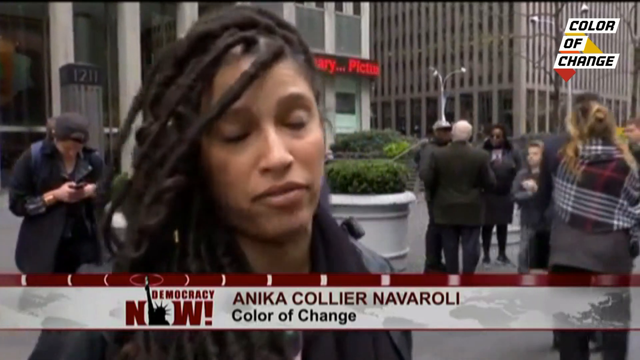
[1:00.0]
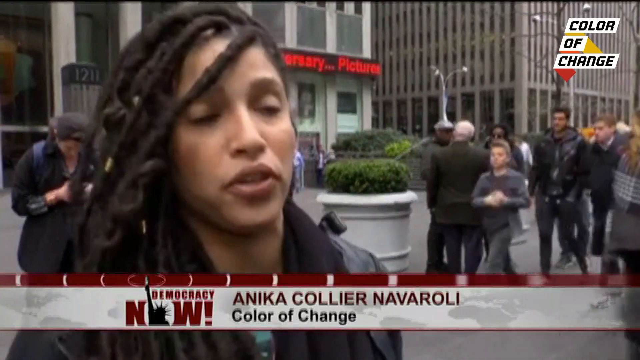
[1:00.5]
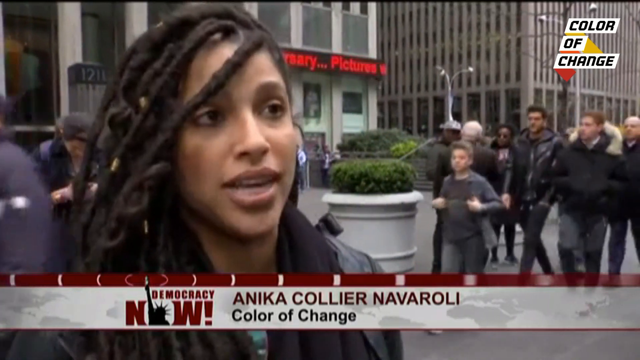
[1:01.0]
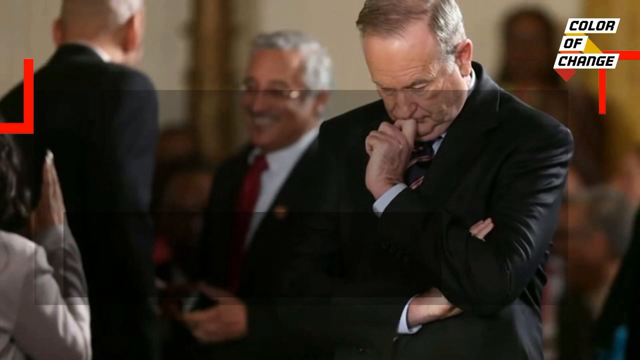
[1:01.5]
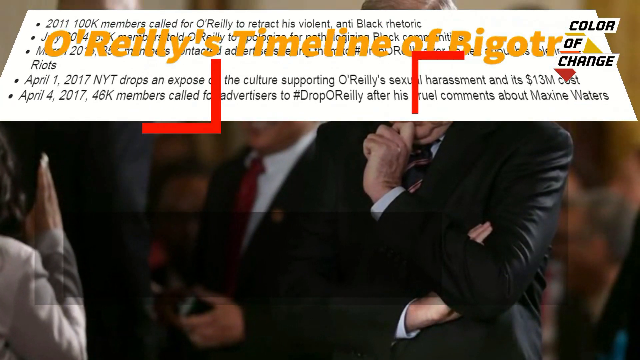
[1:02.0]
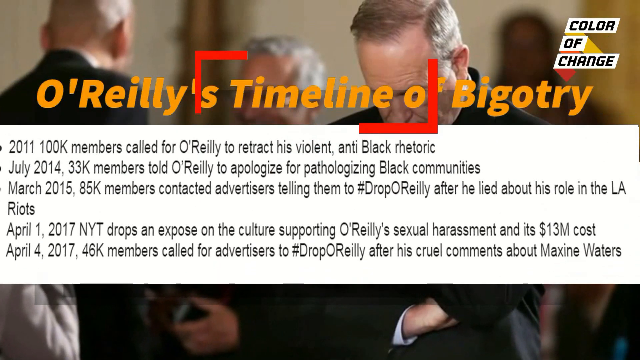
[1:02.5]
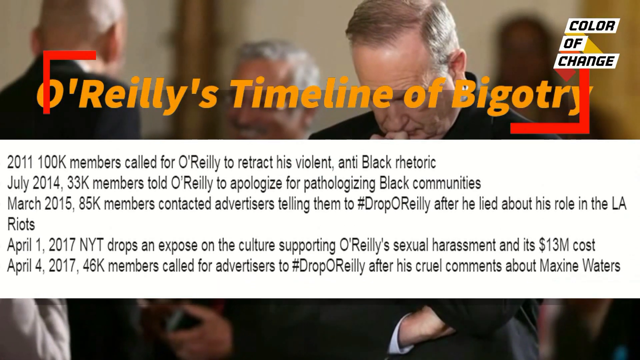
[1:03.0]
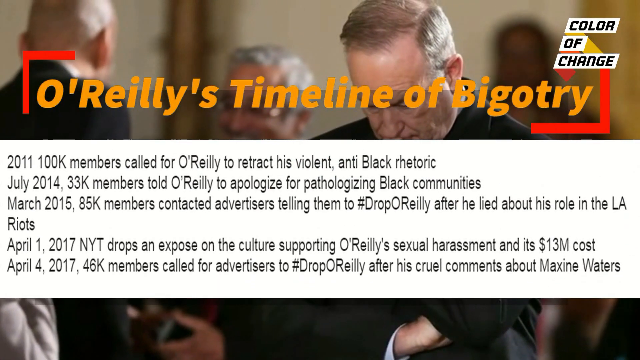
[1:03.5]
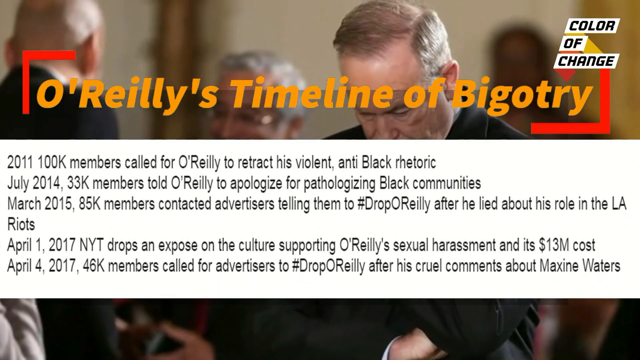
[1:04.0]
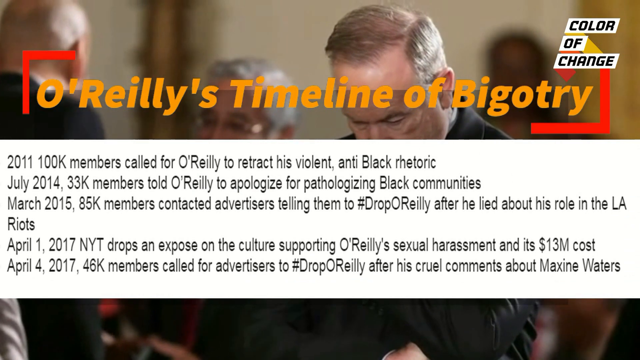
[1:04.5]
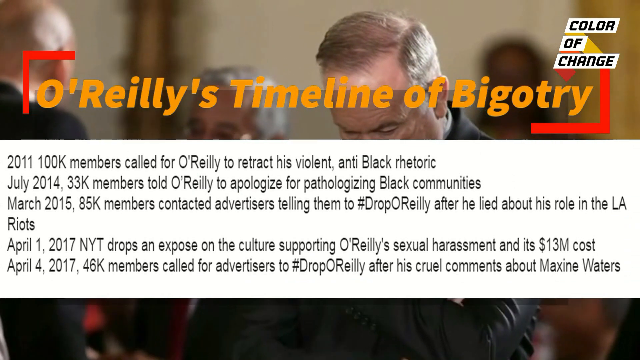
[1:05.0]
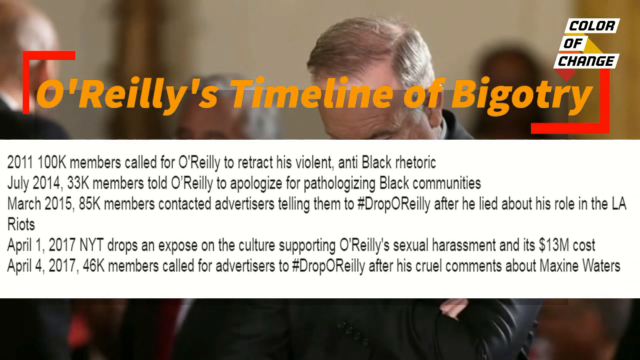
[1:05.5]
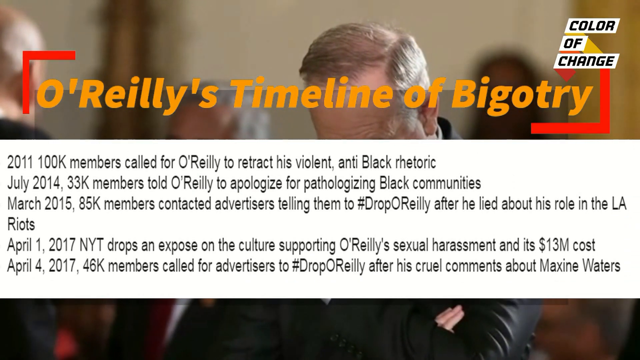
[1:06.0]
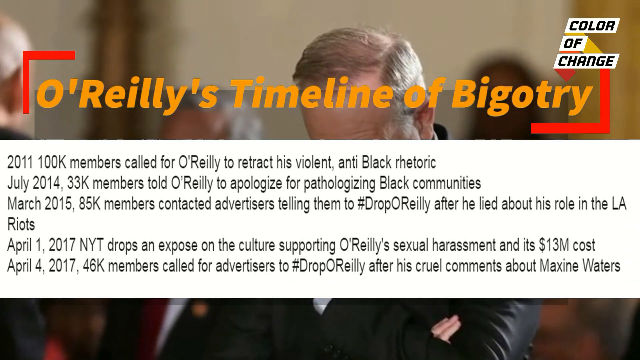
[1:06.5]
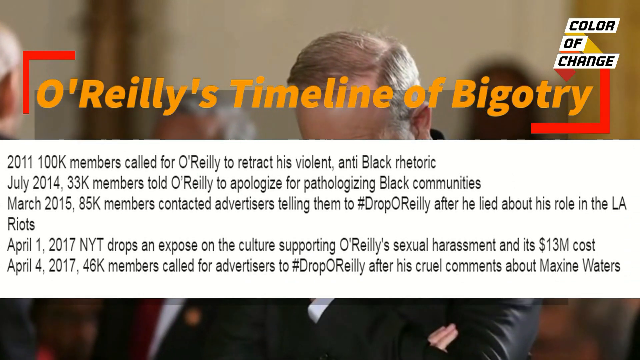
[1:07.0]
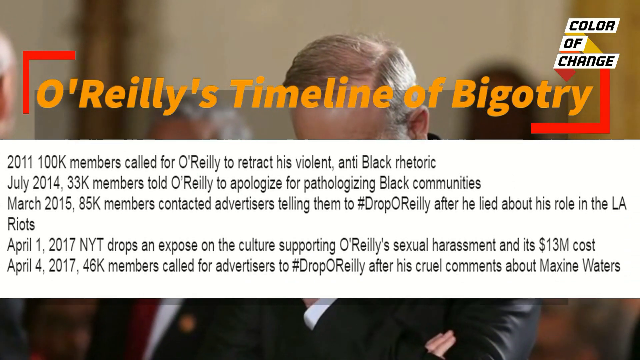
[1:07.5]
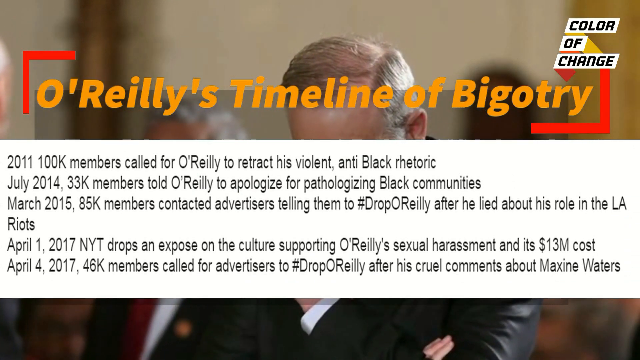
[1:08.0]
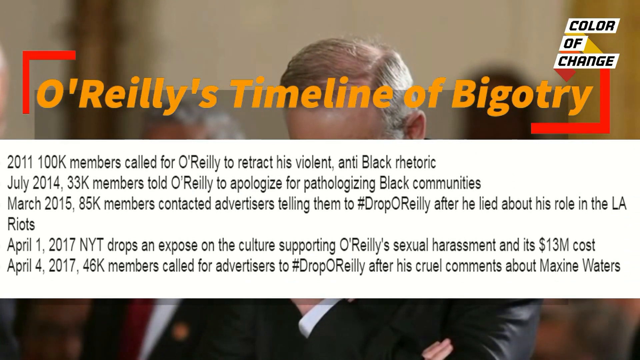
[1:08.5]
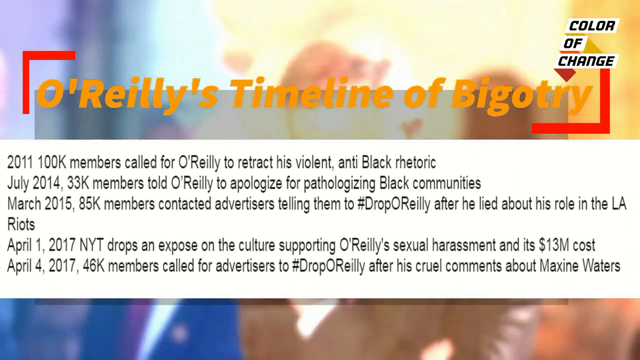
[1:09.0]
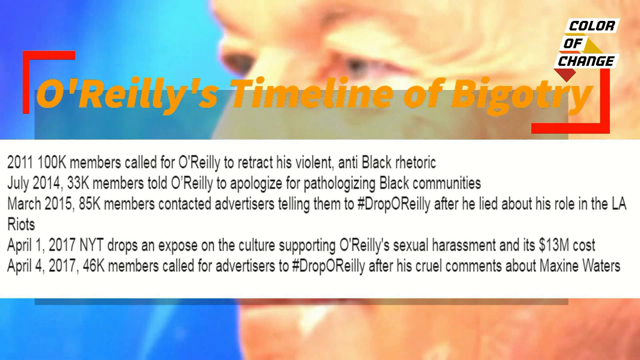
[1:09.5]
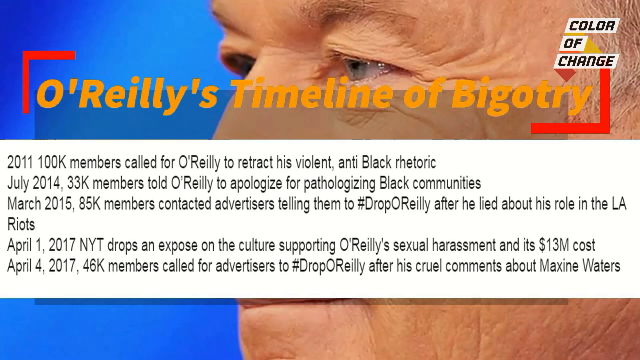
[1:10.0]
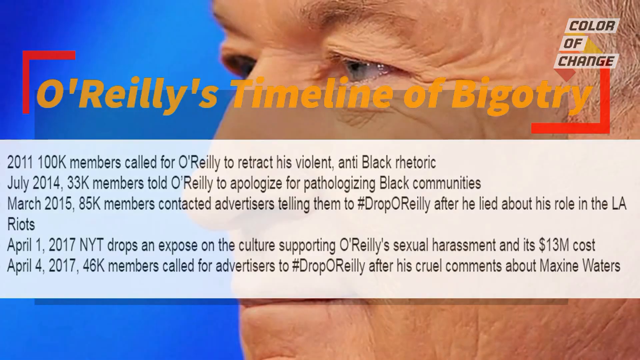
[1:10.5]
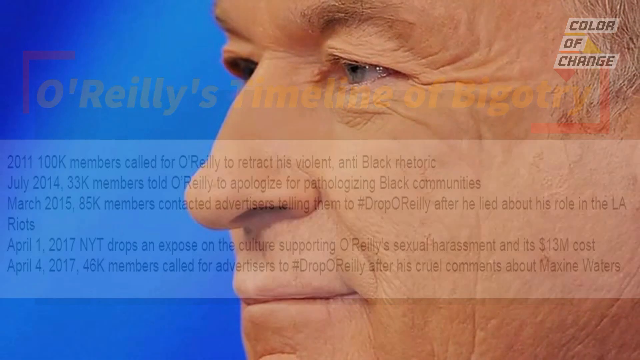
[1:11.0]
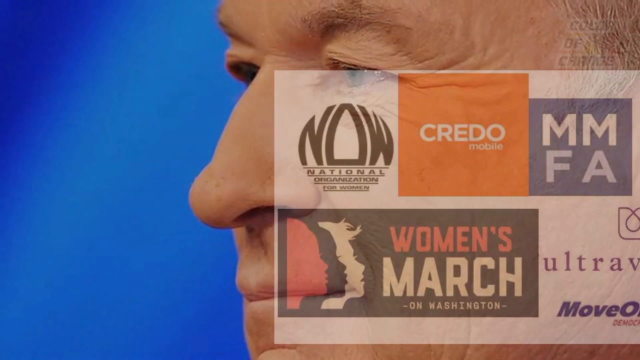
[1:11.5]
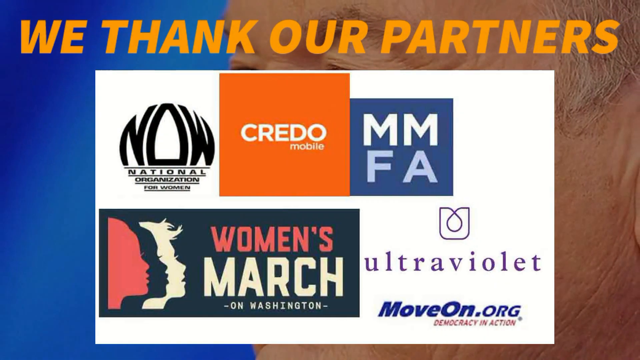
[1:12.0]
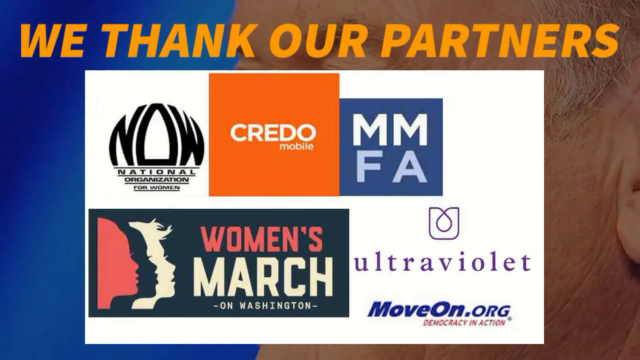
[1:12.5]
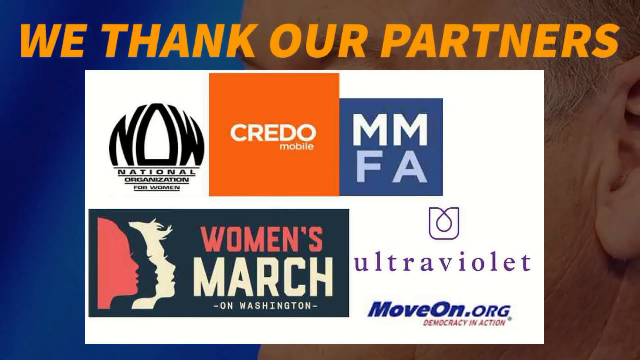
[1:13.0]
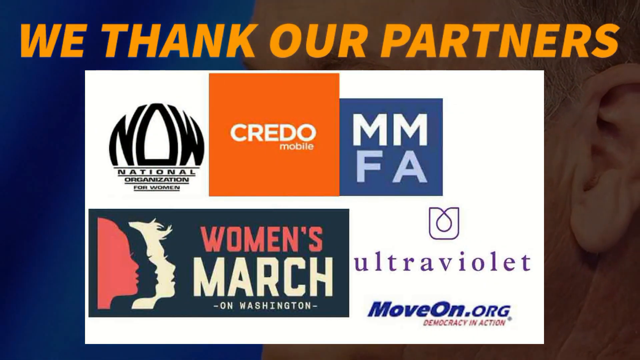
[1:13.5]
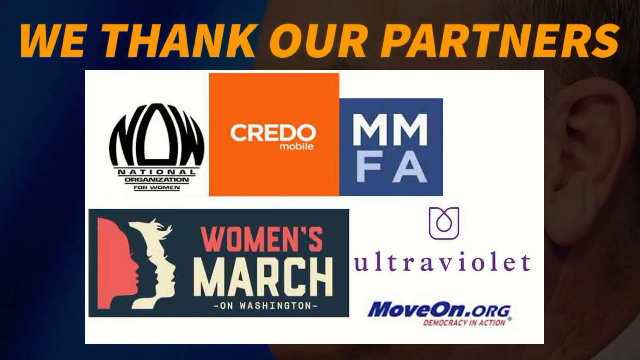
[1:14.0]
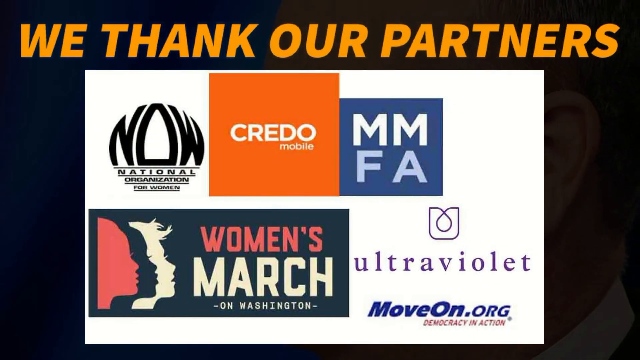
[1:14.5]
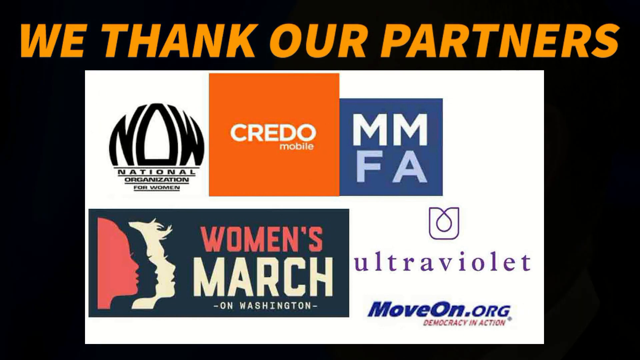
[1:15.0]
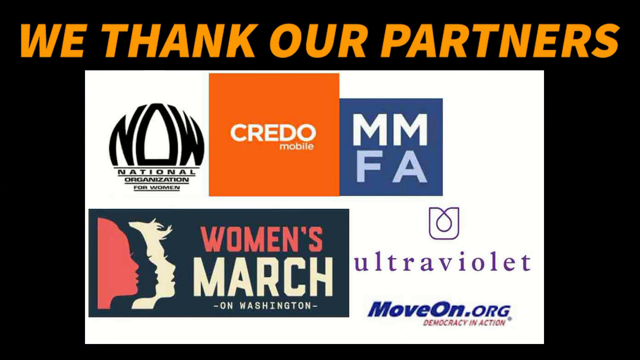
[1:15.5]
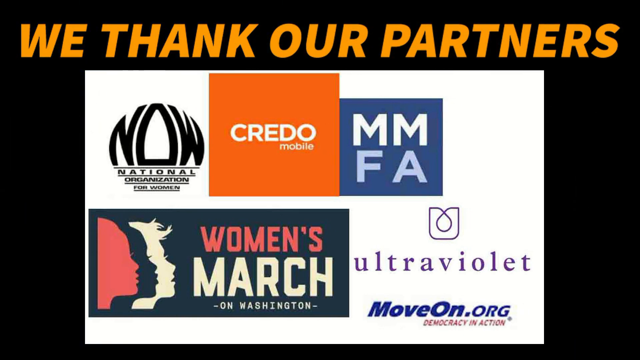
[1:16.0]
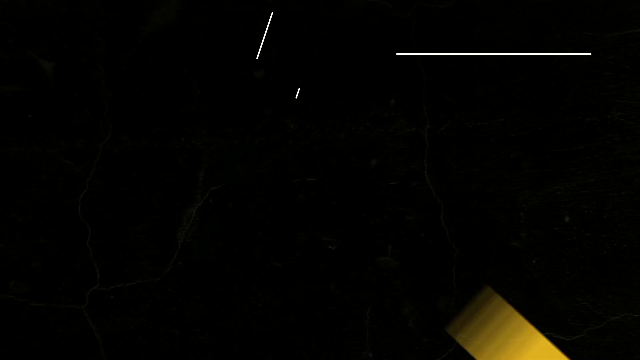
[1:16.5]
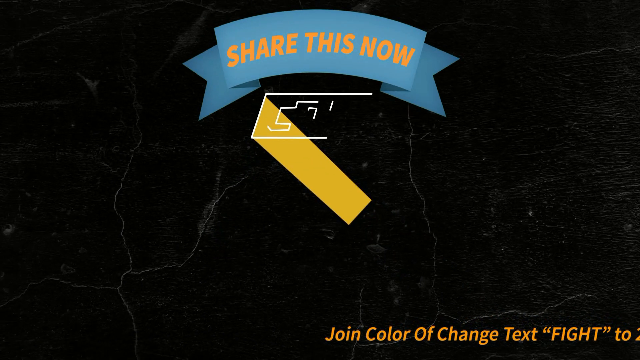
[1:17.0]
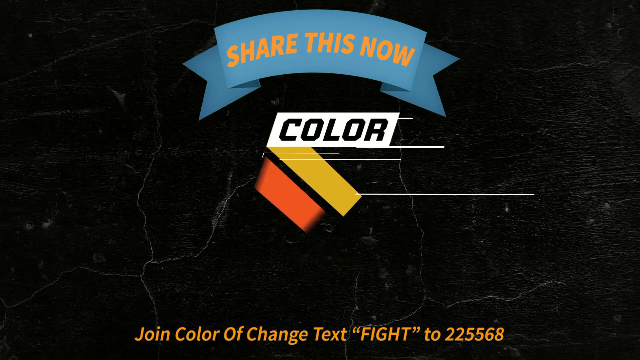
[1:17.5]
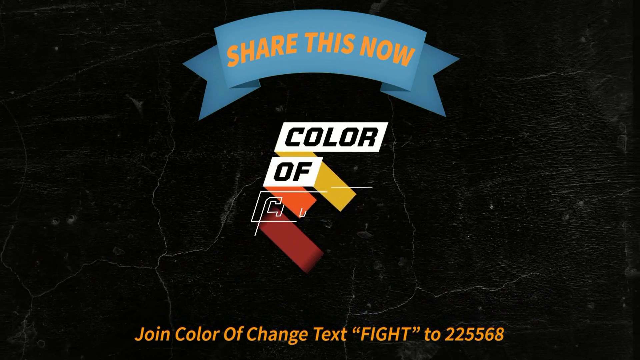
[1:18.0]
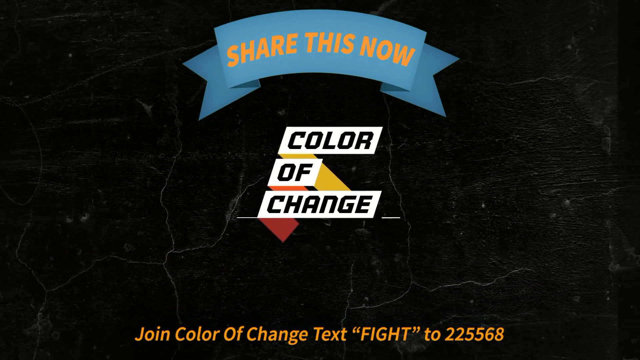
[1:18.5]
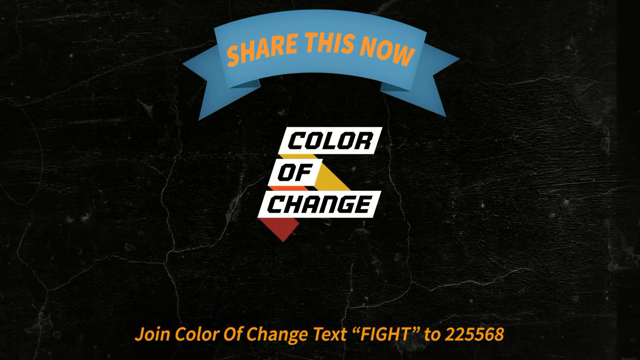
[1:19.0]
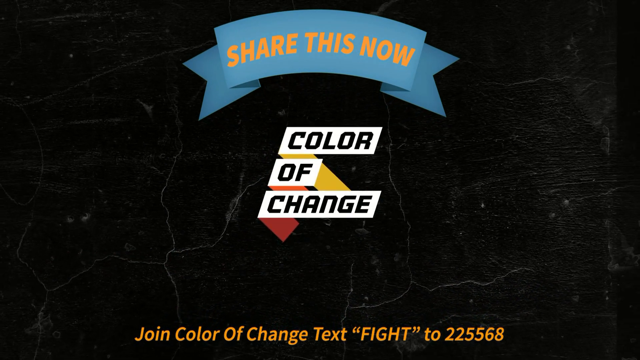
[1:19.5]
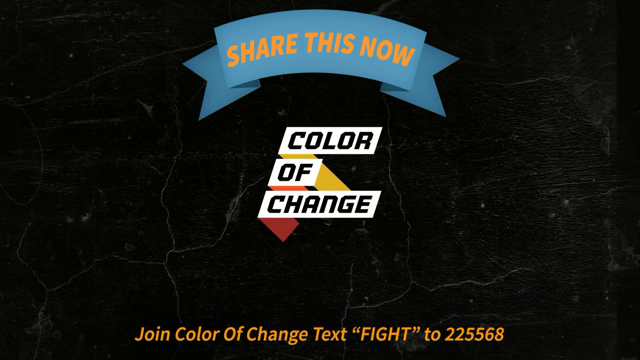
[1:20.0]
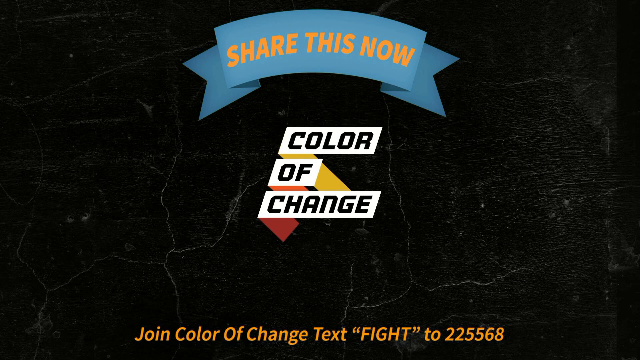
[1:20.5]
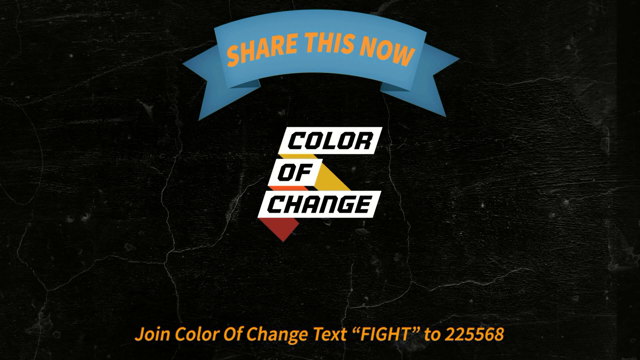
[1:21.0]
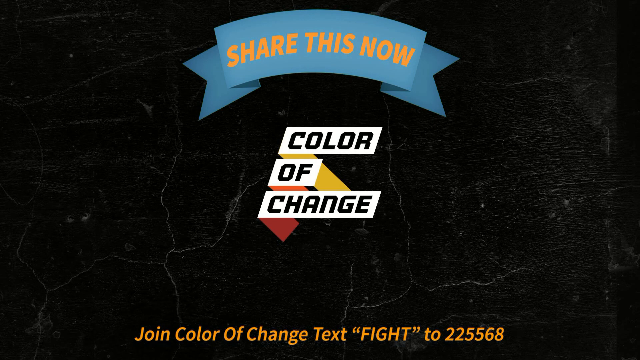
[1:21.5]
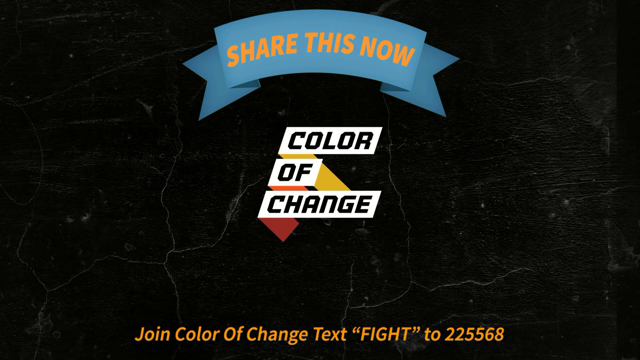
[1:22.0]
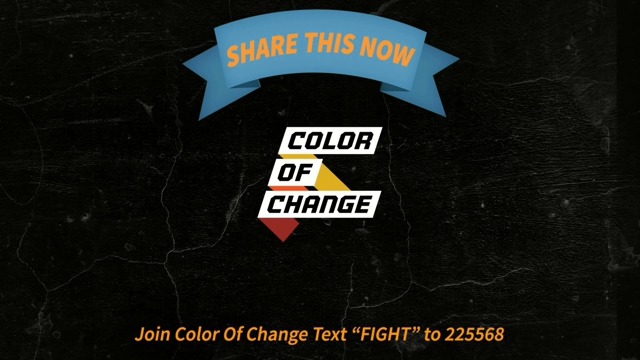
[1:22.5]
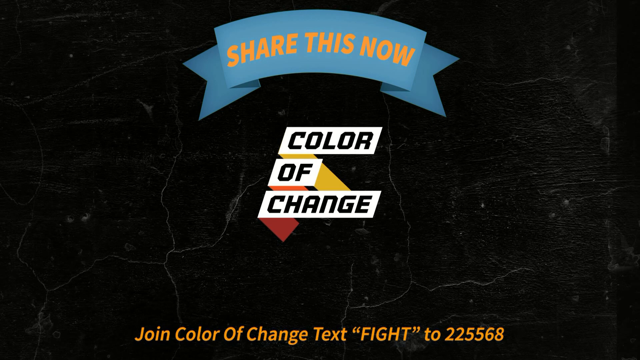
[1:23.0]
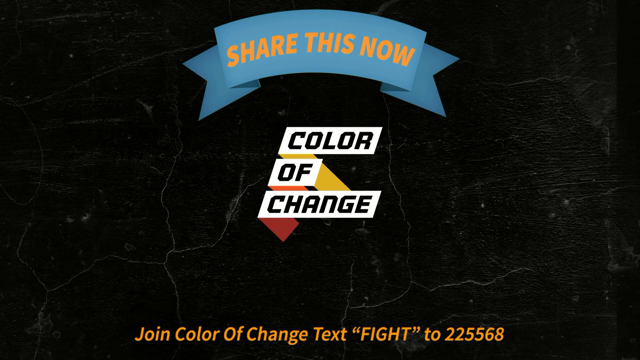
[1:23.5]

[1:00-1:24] The Color of Change video draws attention to O'Reilly's history of bigotry: in 2011, 100,000 members of Color of Change called for O'Reilly to retract his violent anti-Black rhetoric; in 2014, 33,000 members told him to apologise for pathologising Black communities; in 2015, 85,000 members contacted advertisers to tell them to drop O'Reilly after he lied about his role in the LA riots. In April 2017, the New York Times published an expose into the culture surrounding O'Reilly's sexual harassment and the fact it cost 13 million in legal fees, which responded to another petition by Color of Change members about cruel comments he made about Maxine Waters. Color of Change then recognises its allies: National Organisation for Women, MMFA, Ultraviolet, MoveOn.org, Credo Mobile and the Women's March on Washington.